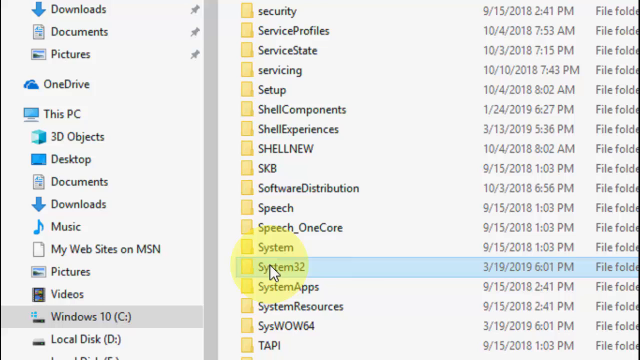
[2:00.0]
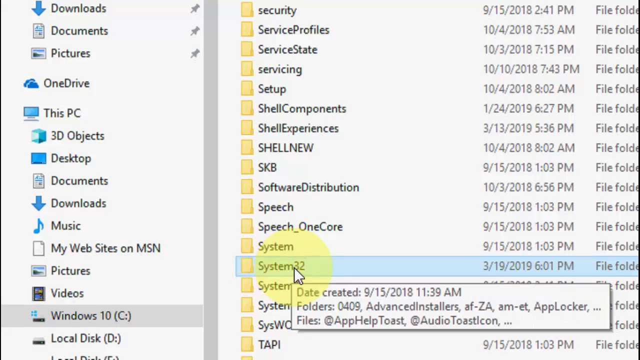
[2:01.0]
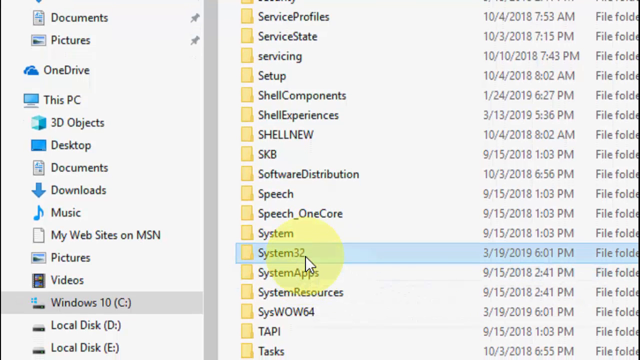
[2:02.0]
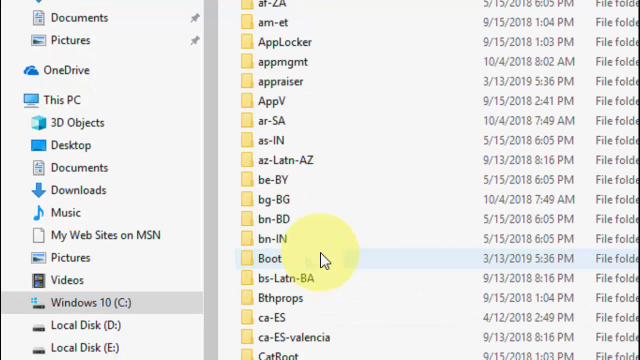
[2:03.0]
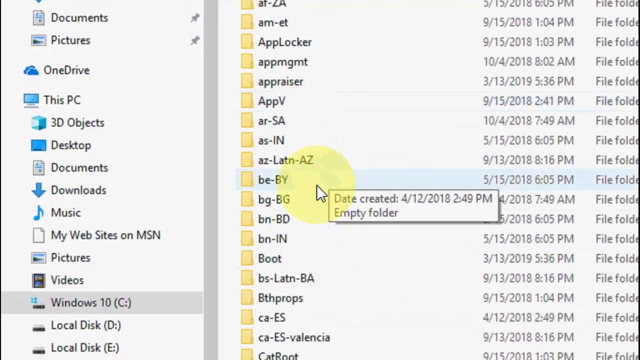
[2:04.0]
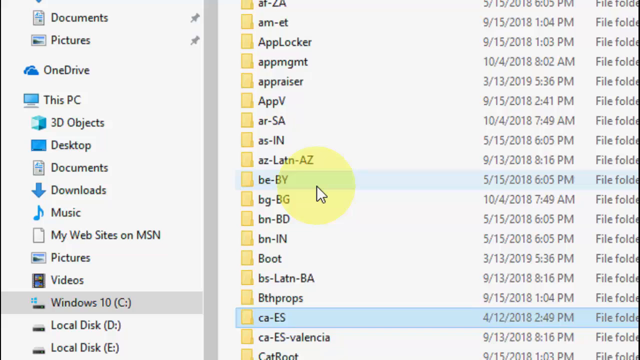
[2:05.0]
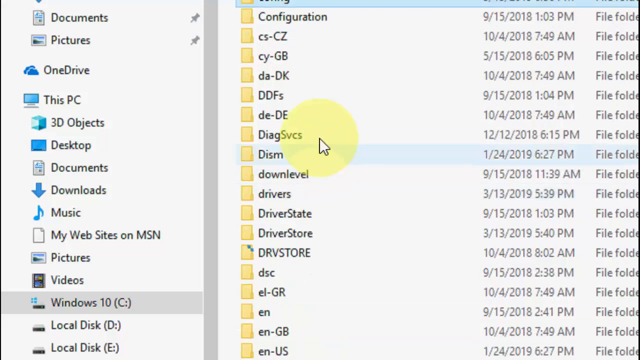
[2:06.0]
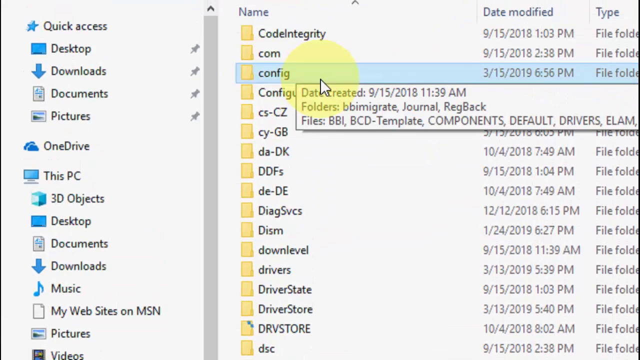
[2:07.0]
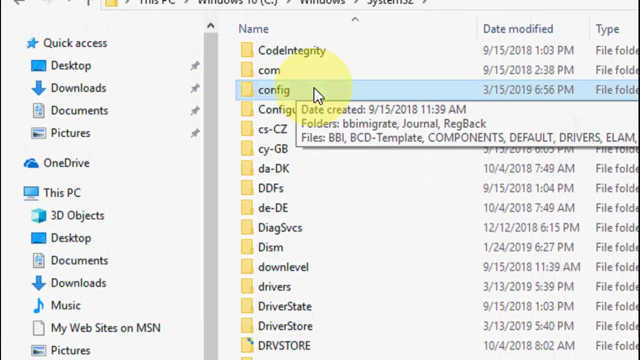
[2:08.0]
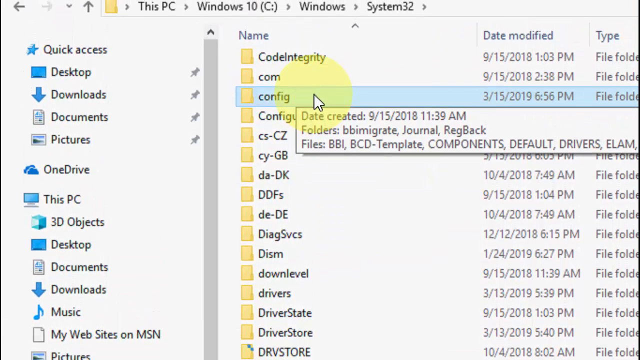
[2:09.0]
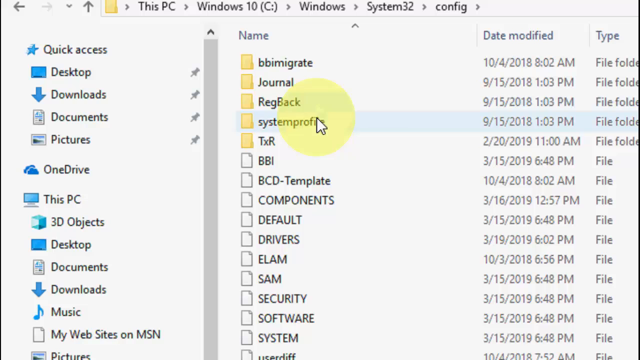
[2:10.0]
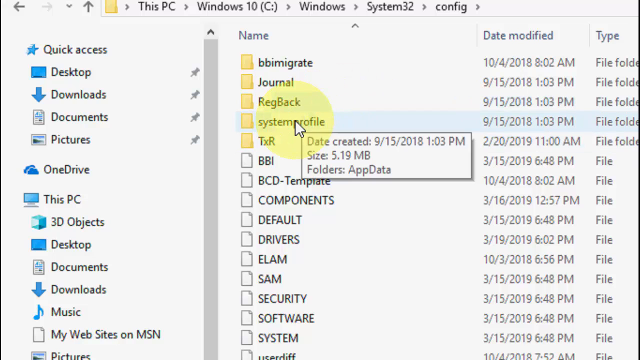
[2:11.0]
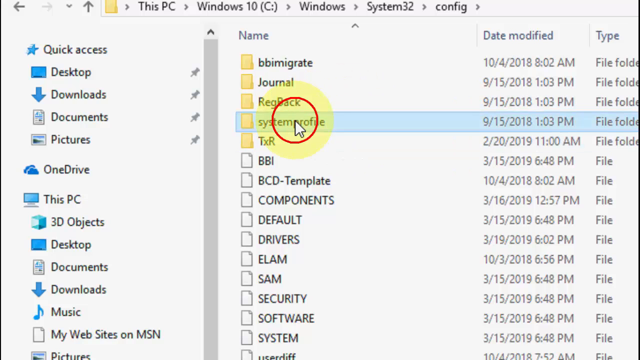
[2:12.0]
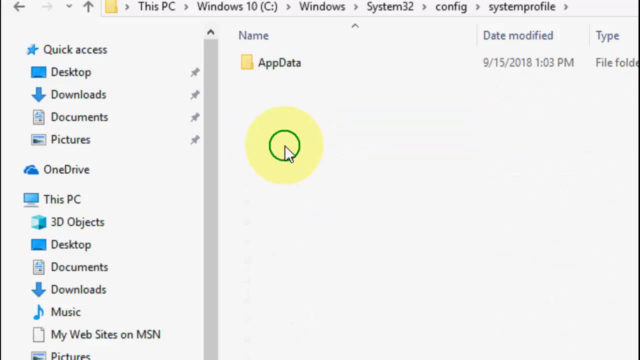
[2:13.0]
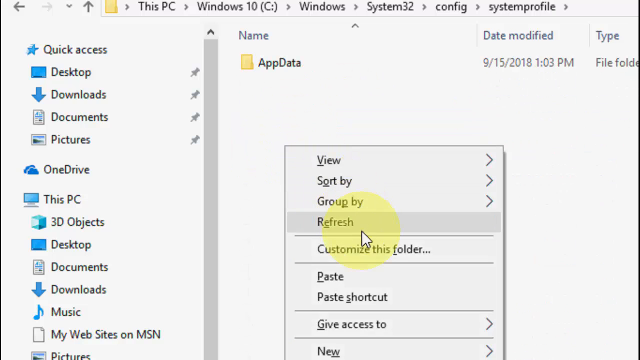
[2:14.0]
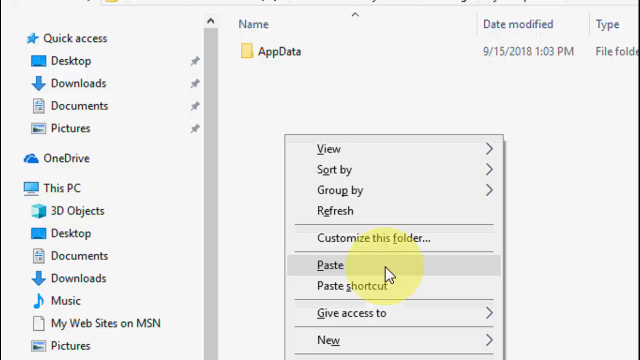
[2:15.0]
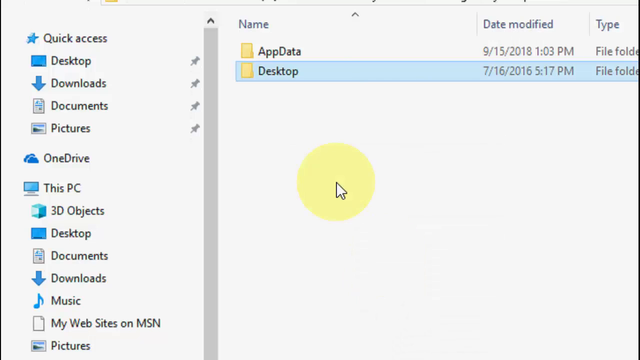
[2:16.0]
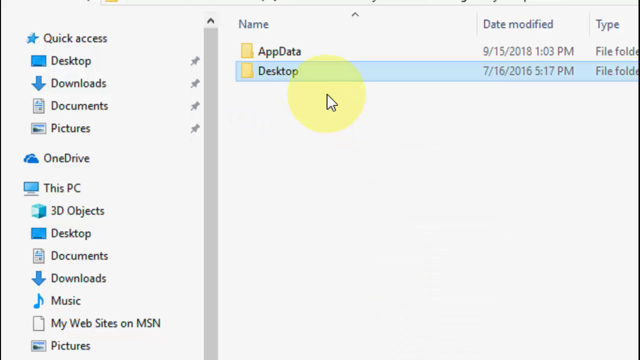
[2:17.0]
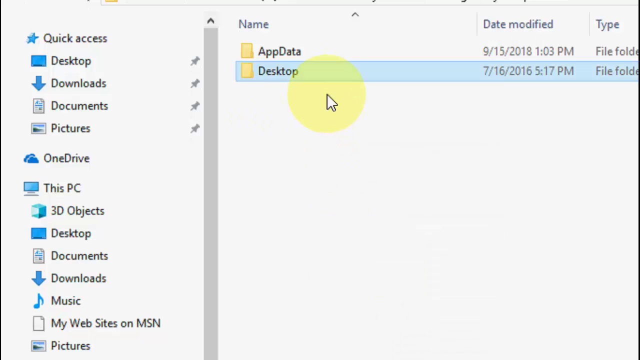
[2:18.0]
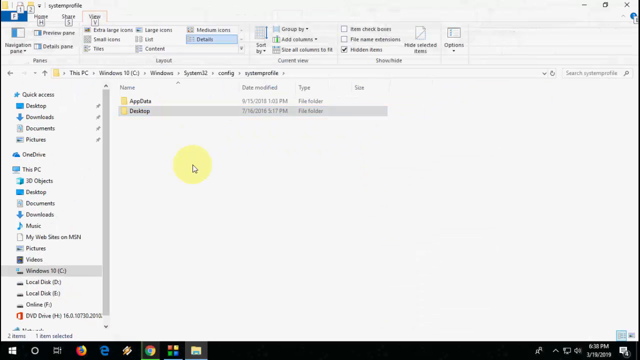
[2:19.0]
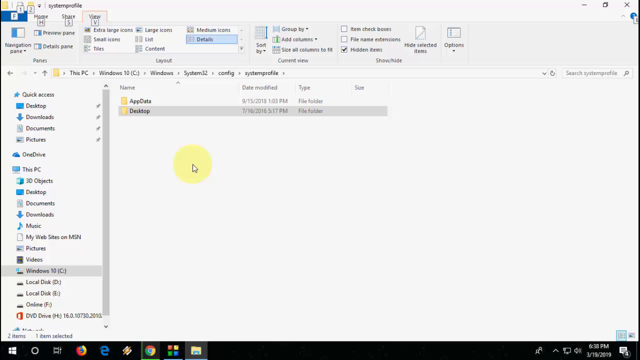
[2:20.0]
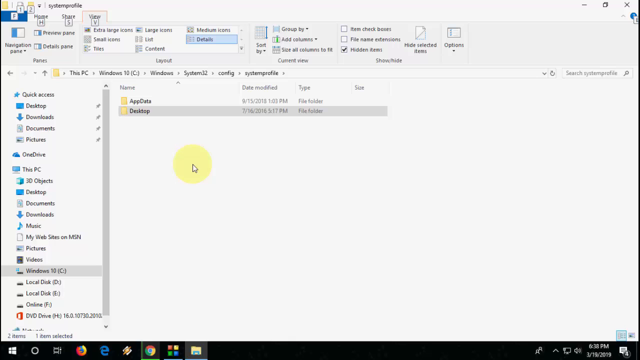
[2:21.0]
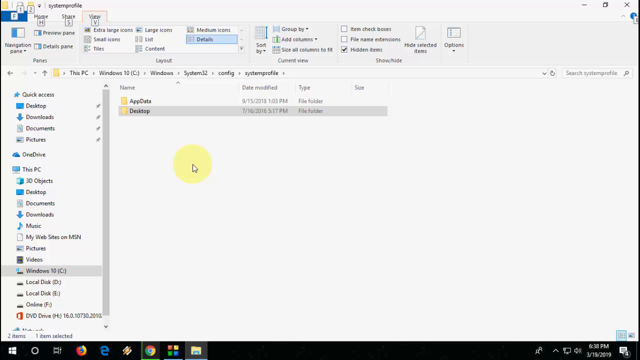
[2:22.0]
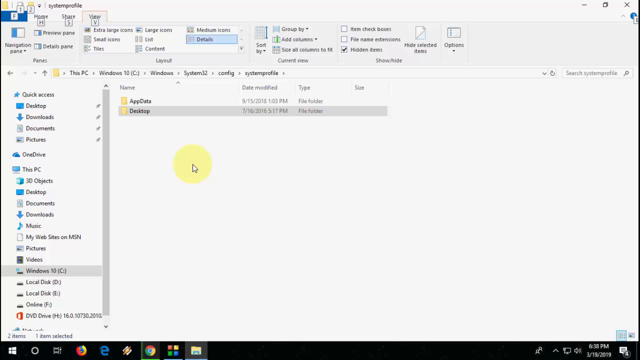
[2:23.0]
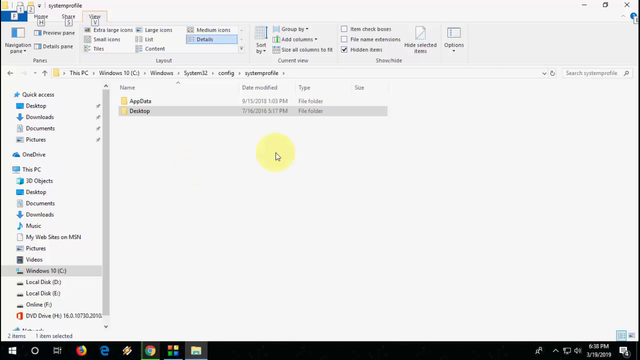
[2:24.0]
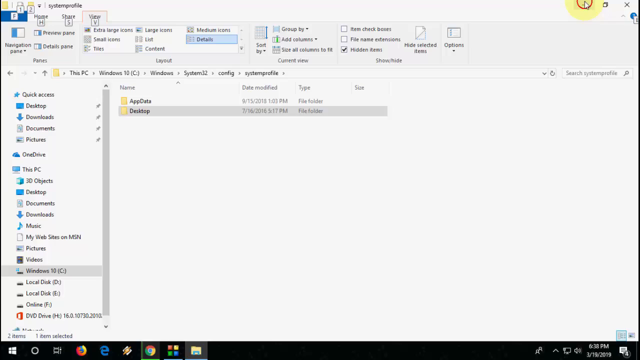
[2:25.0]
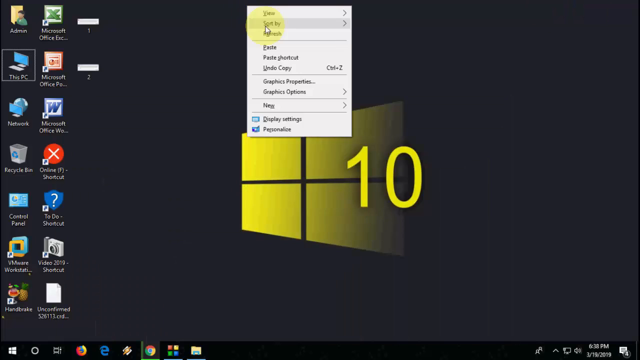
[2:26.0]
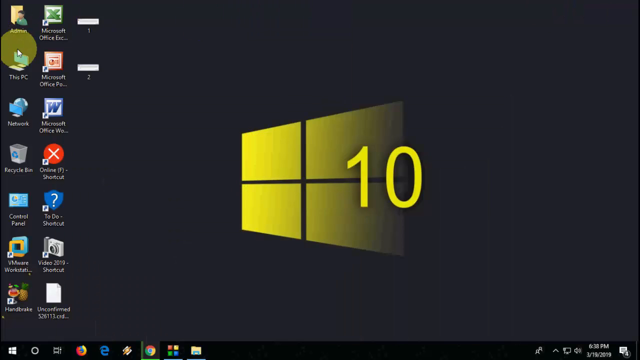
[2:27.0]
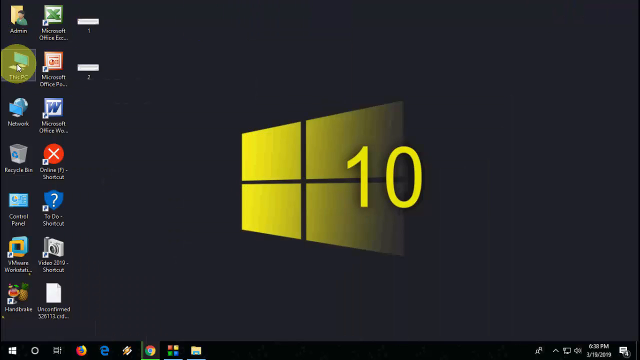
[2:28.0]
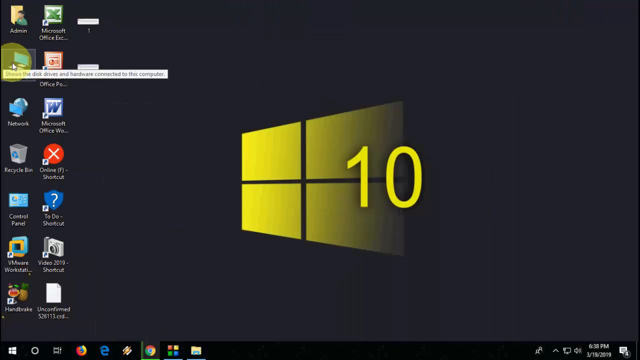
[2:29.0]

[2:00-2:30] A recording of a desktop shows a folder with the file path this PC, Windows 10, Users, Default. The mouse cursor, highlighted by a yellow circle, hovers over a folder called System32, clicks it once, and then double-clicks it, producing a red circle at the click point. Multiple folders are listed, and the user quickly navigates to a folder called BE-BY, clicks it once, unclicks it, then scrolls back up and clicks a folder called Config. Double-clicking Config opens even more folders and files. The user mouses over a folder called System Profile and double-clicks it, which opens to list a folder called AppData. They right-click an empty white space to open a context menu and click Paste, which pastes a folder called Desktop into this folder.